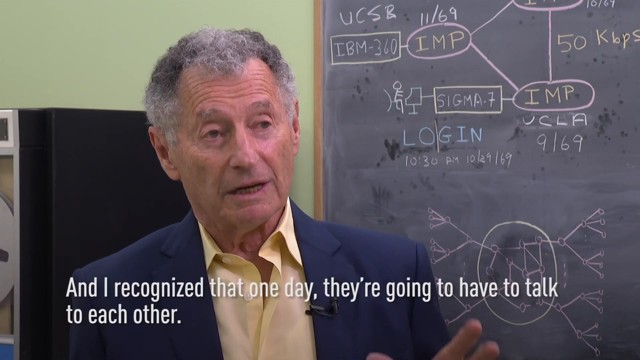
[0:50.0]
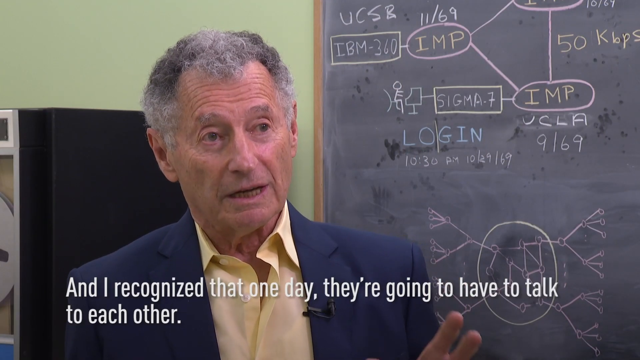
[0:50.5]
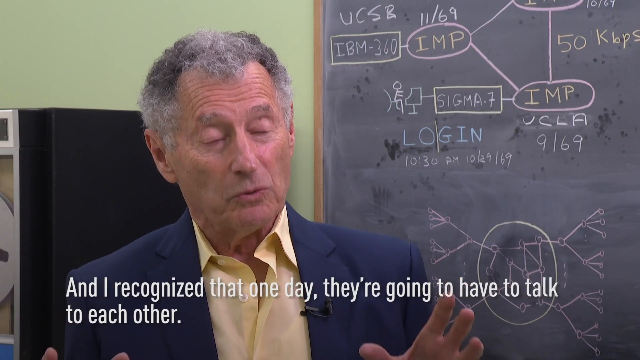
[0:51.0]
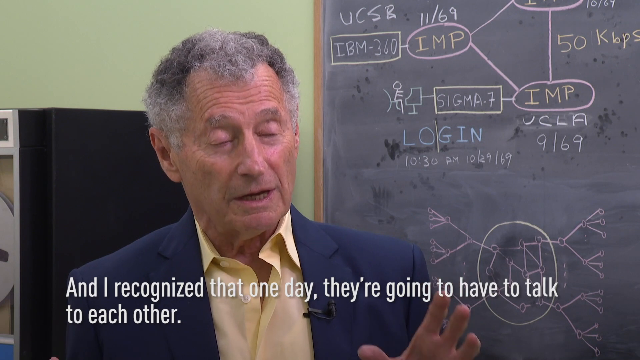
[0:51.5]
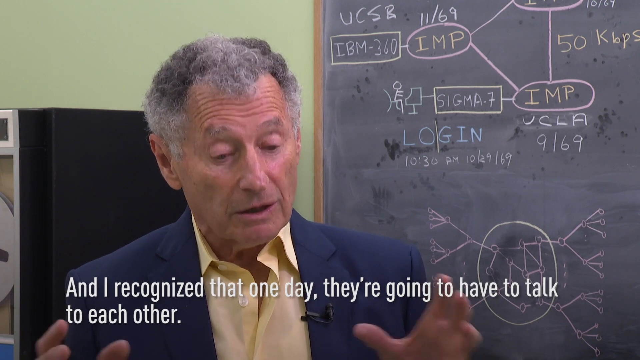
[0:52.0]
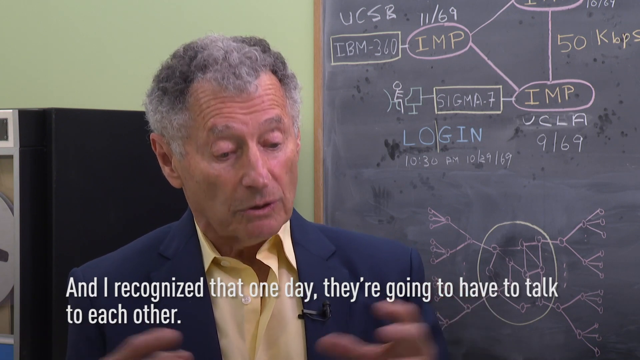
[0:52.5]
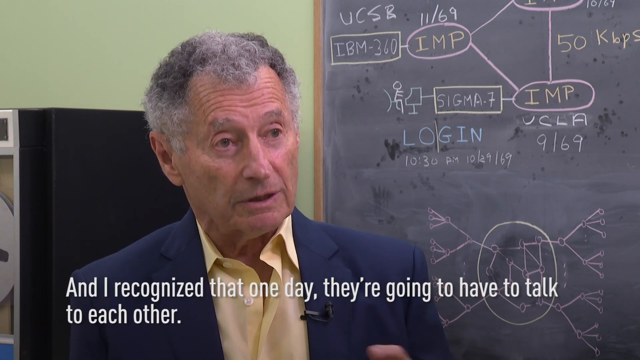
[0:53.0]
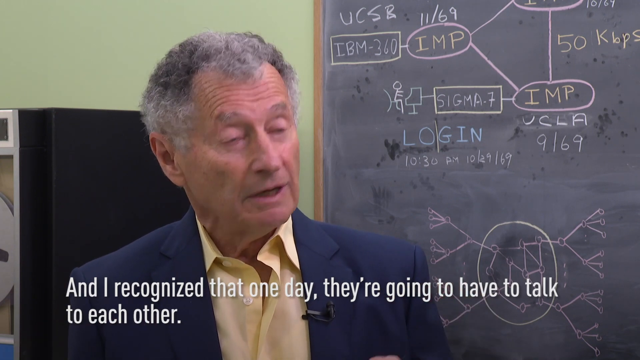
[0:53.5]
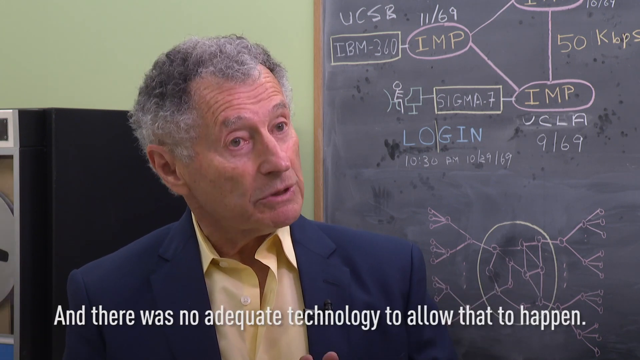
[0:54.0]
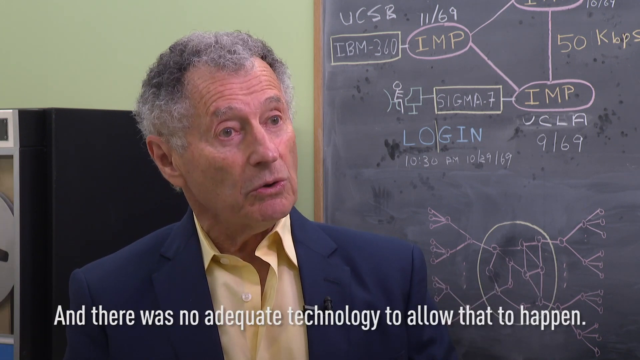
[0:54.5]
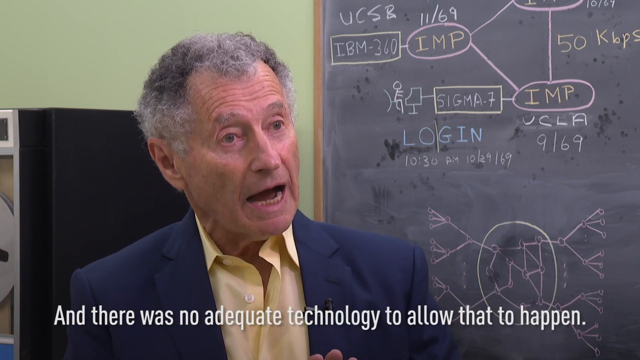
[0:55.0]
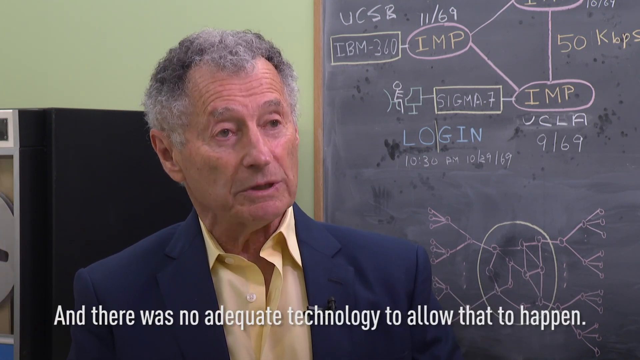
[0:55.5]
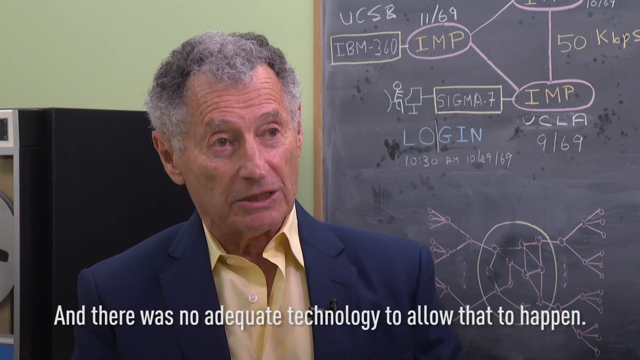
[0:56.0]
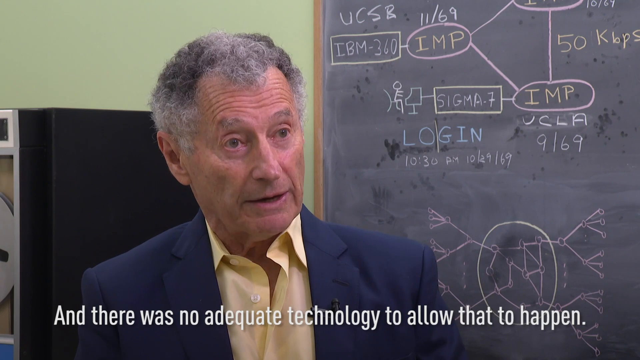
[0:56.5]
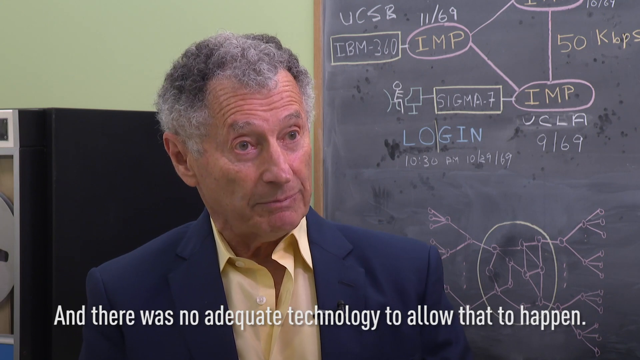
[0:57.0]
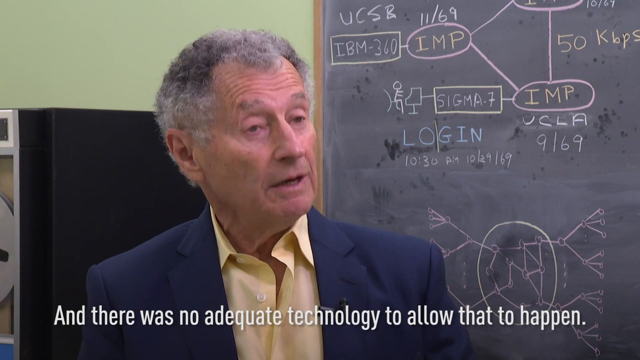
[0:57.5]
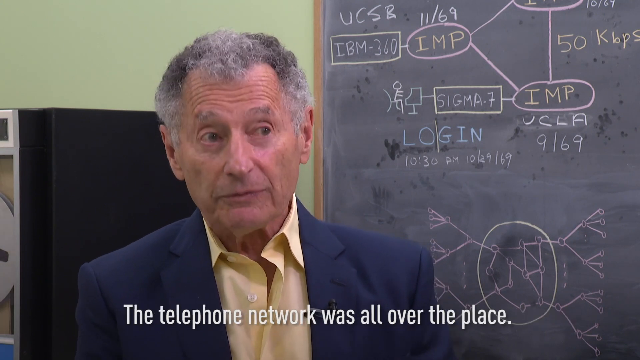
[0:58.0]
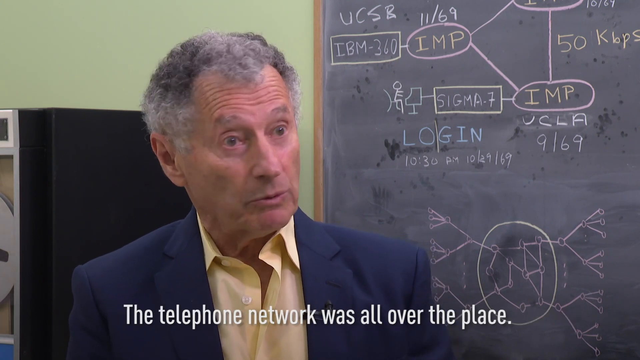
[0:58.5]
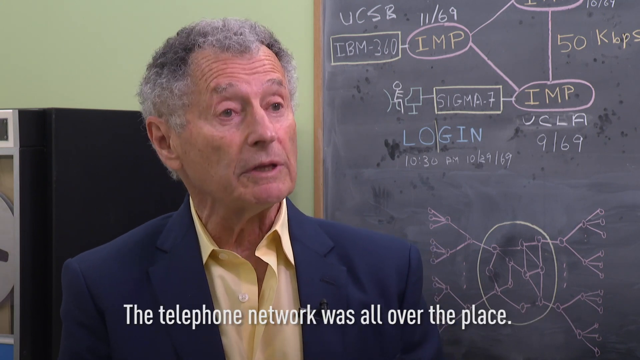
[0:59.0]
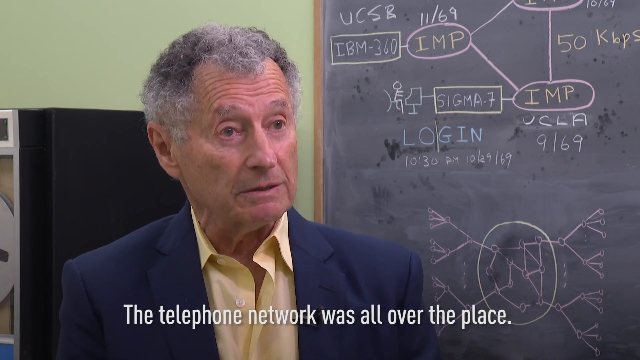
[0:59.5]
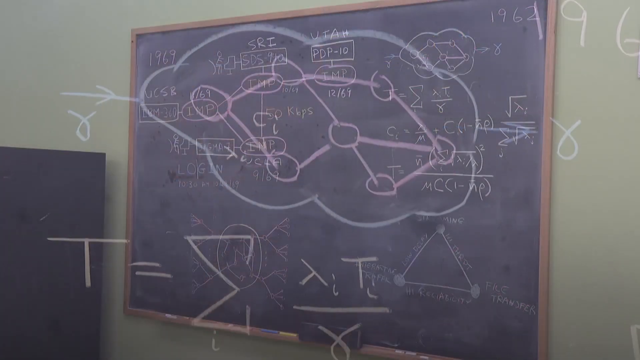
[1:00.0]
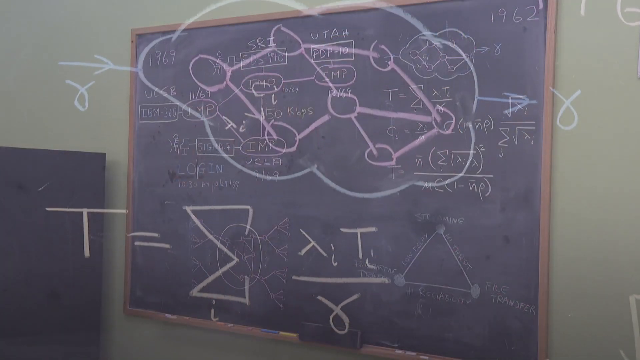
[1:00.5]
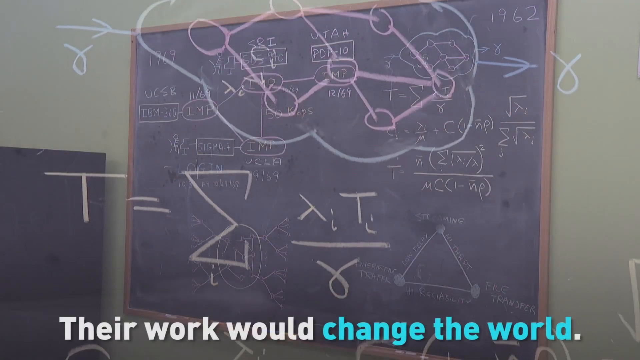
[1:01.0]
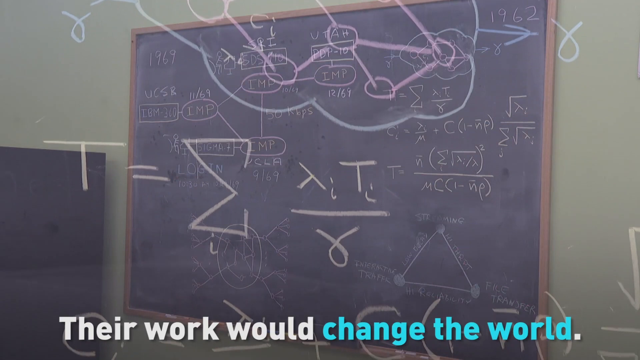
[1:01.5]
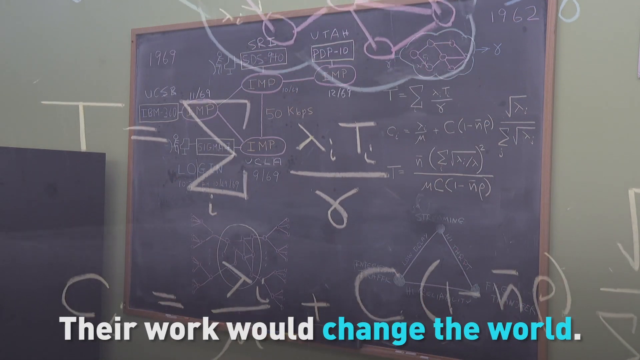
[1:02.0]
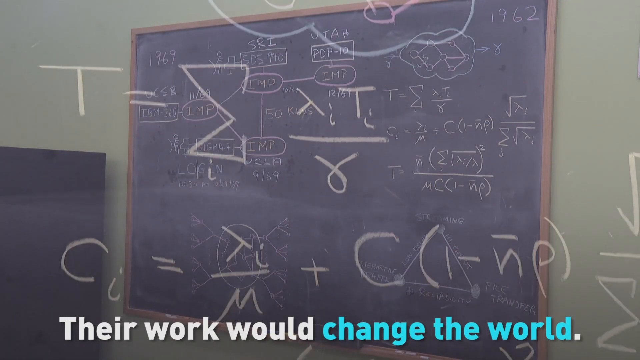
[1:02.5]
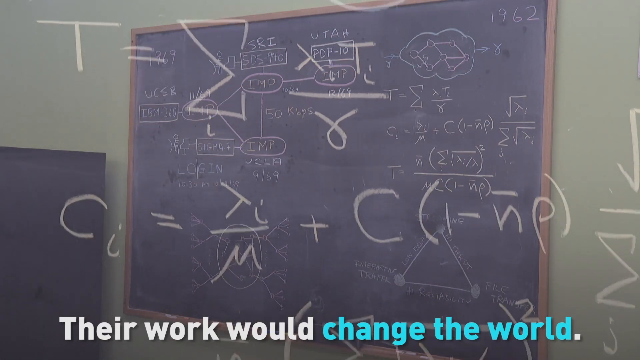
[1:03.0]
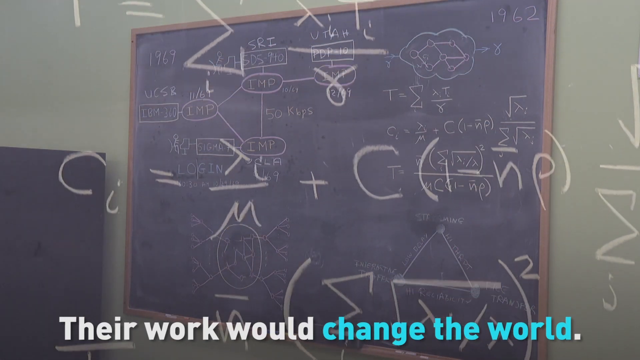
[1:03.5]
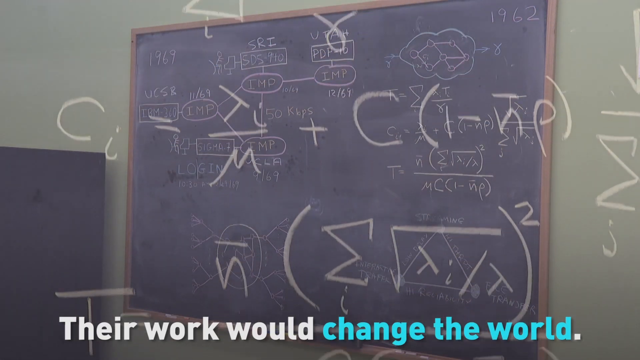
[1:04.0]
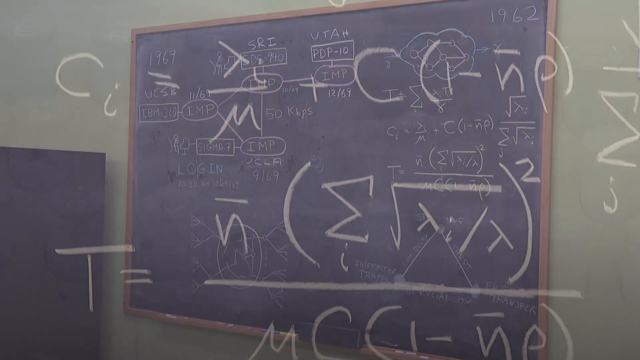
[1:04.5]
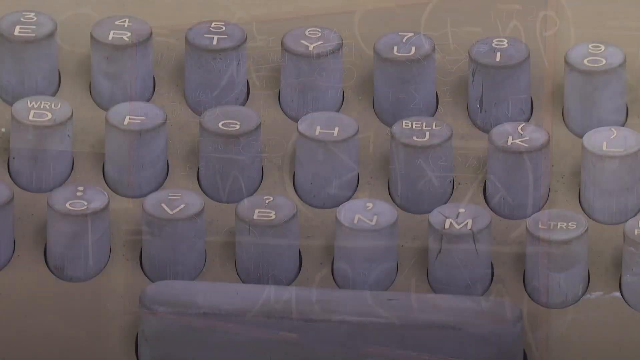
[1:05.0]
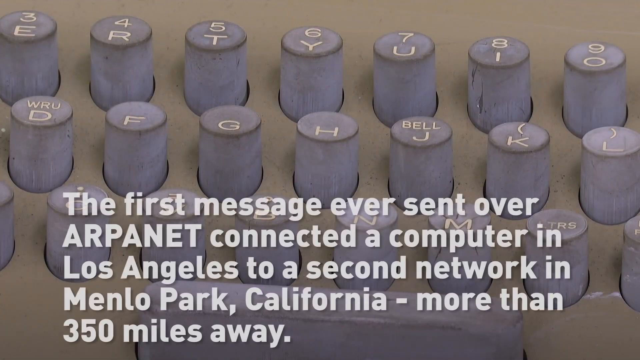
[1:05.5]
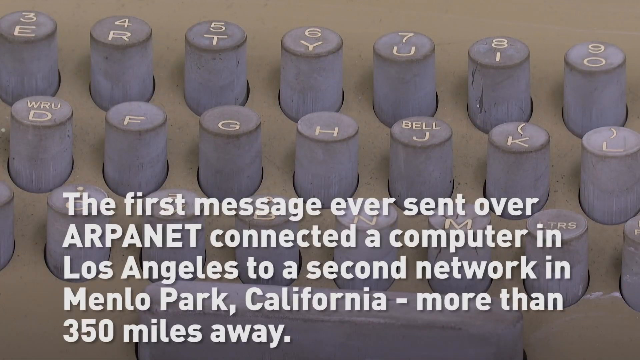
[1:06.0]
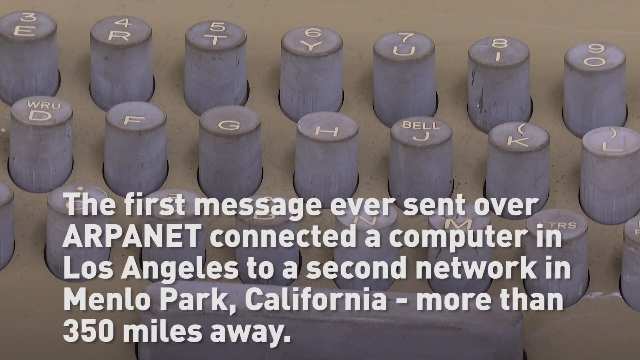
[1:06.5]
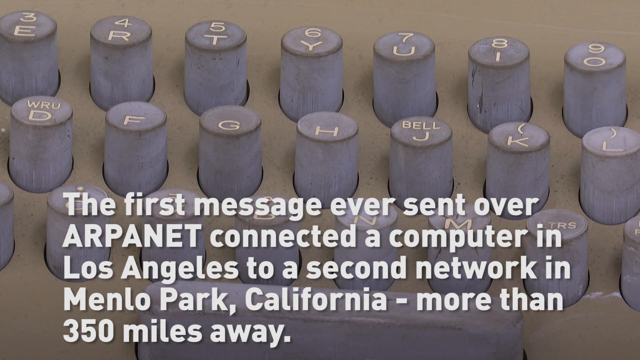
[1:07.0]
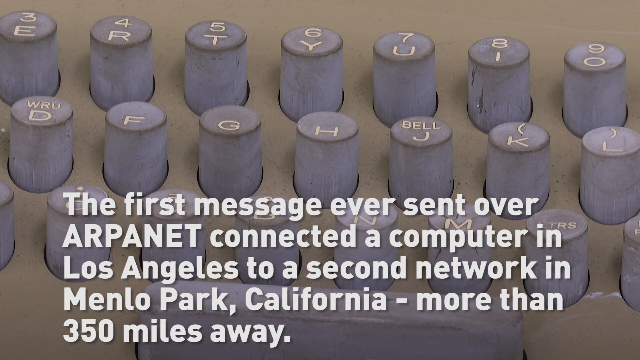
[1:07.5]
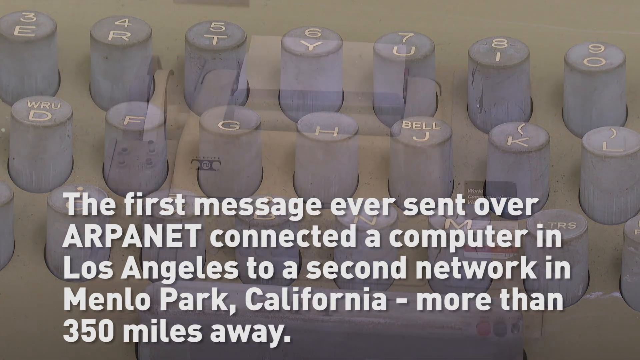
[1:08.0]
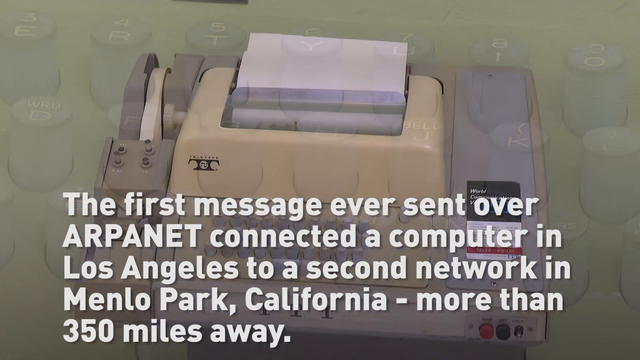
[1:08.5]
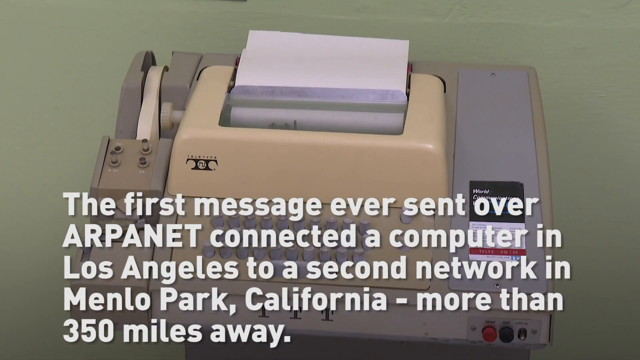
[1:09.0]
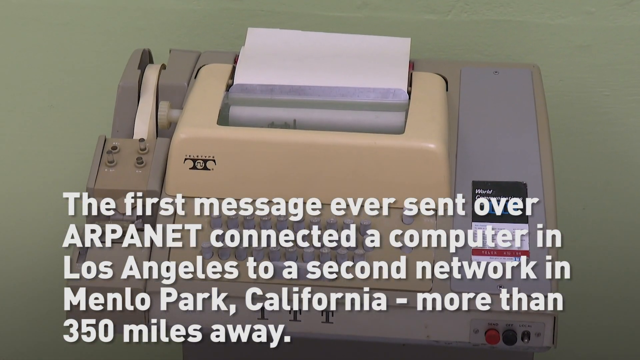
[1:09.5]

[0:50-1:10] A close-up shows an older man with gray hair sitting in front of a blackboard on the right with what look like computer programming designs written in chalk. As he speaks to someone off camera, the caption reads, "And I recognized that one day they're going to have to talk to each other." He gestures with his left hand, nodding and looking up and down as he talks. The caption changes to "And there was no adequate technology to allow that to happen," then to "The telephone network was all over the place." A close-up of the blackboard with equations on it follows as the camera pans over it, with the caption "Their work would change the world." Then a close-up shows what looks like a keyboard whose keys are tall, white and cylindrical, shaped like little towers, as the caption reads, "The first message ever sent over ARPANET connected a computer in Los Angeles to a second network in Menlo Park, California more than 350 miles away."